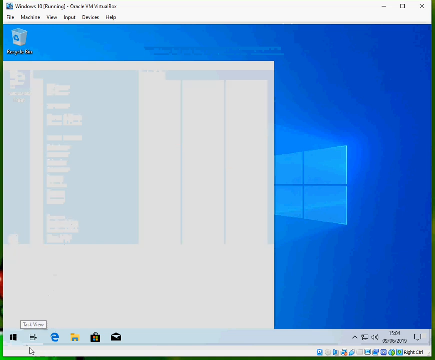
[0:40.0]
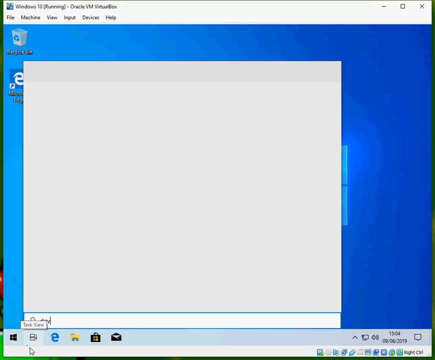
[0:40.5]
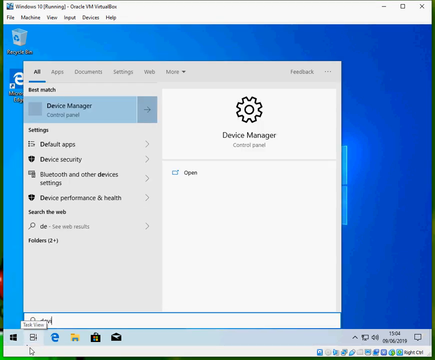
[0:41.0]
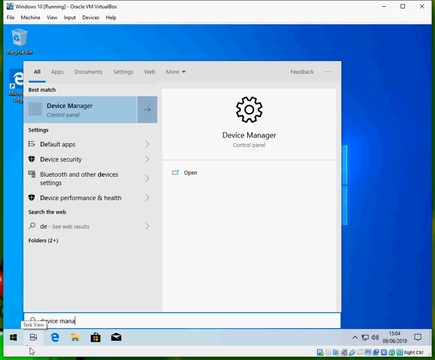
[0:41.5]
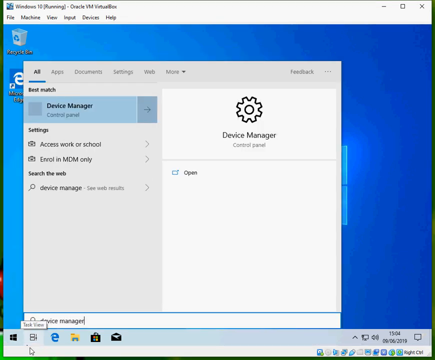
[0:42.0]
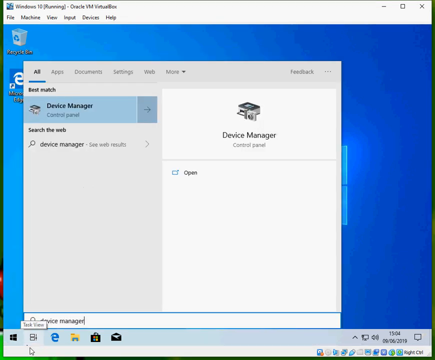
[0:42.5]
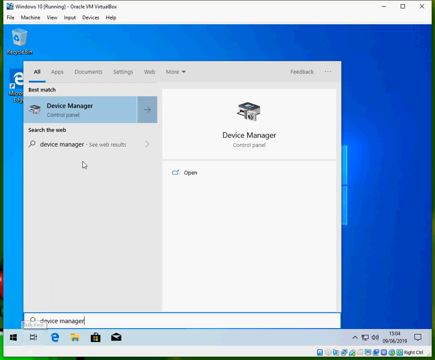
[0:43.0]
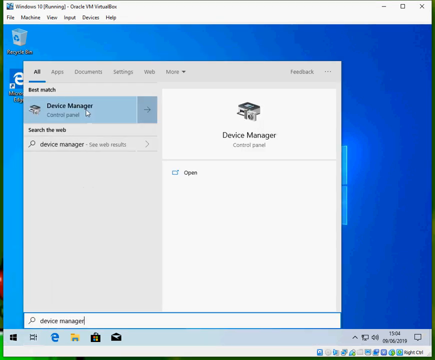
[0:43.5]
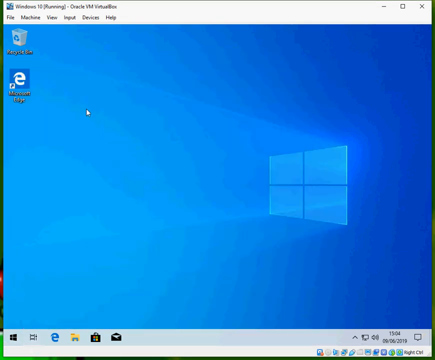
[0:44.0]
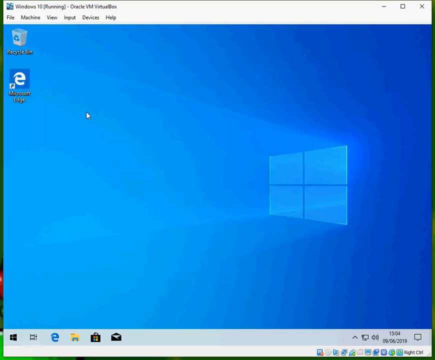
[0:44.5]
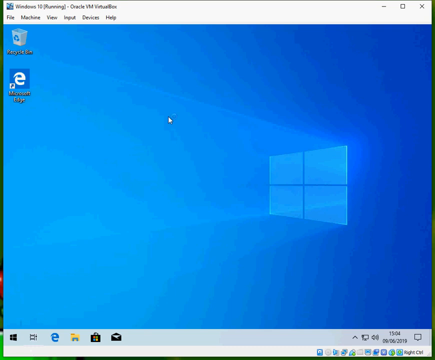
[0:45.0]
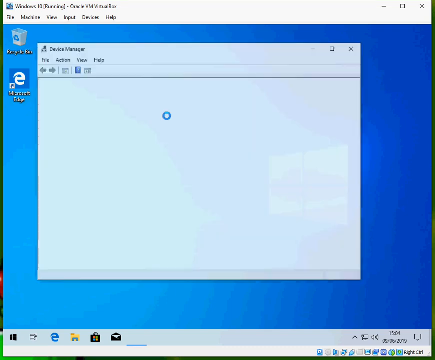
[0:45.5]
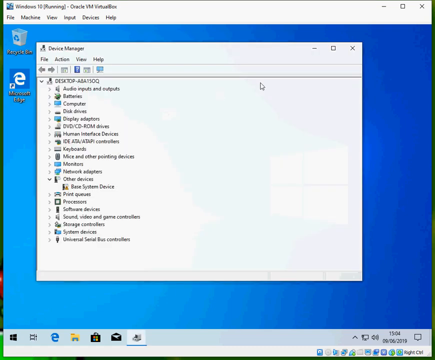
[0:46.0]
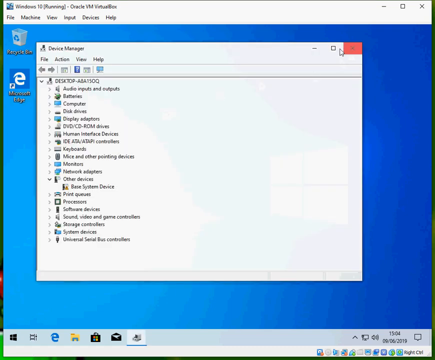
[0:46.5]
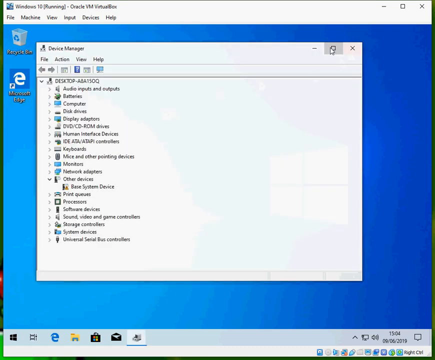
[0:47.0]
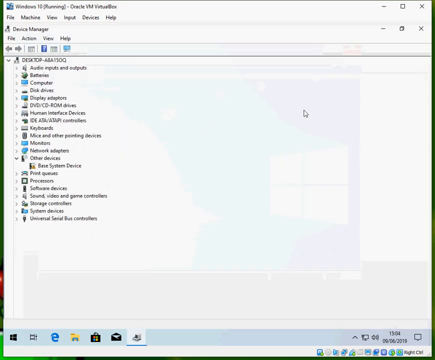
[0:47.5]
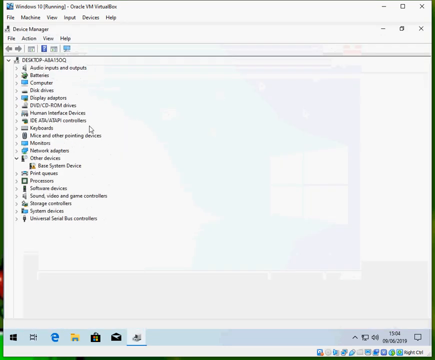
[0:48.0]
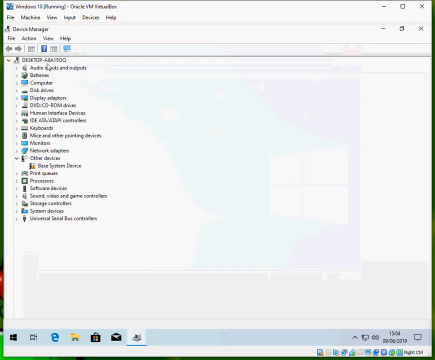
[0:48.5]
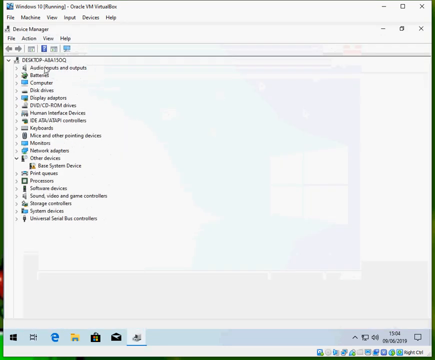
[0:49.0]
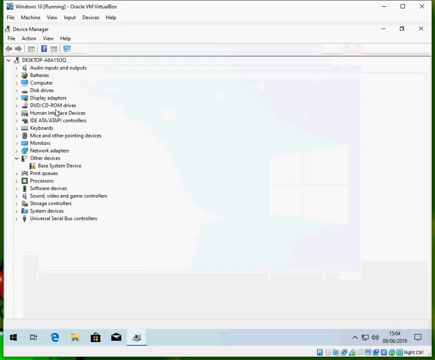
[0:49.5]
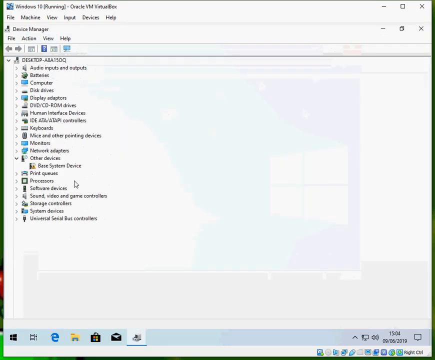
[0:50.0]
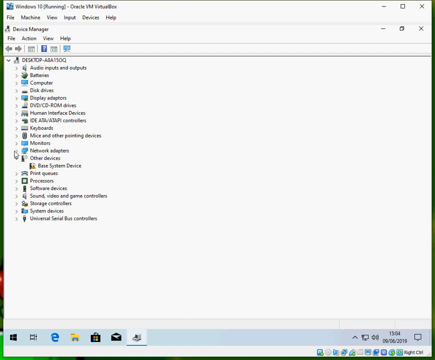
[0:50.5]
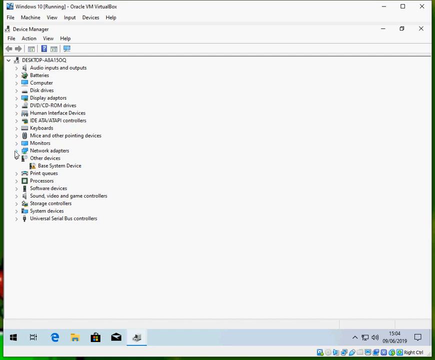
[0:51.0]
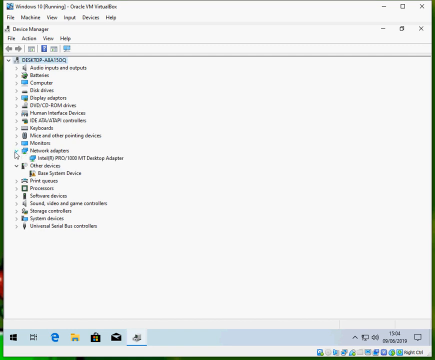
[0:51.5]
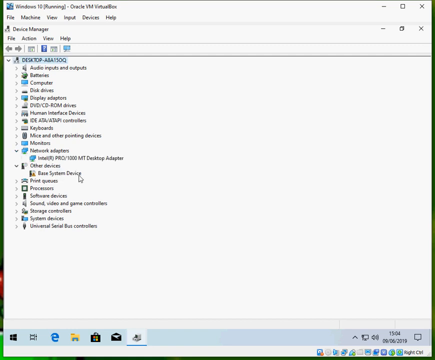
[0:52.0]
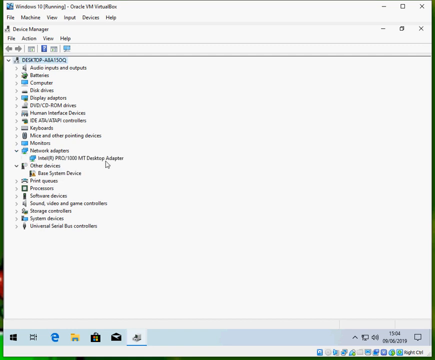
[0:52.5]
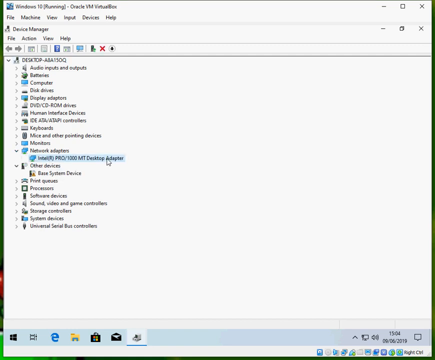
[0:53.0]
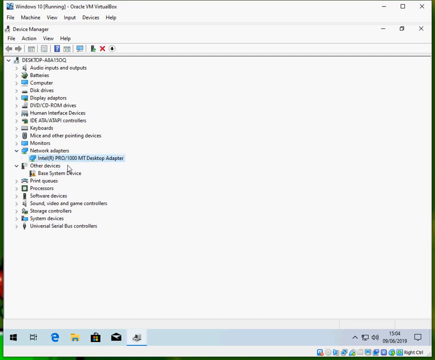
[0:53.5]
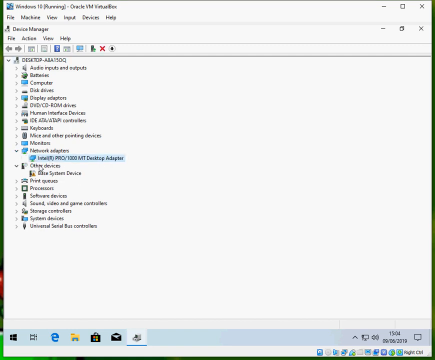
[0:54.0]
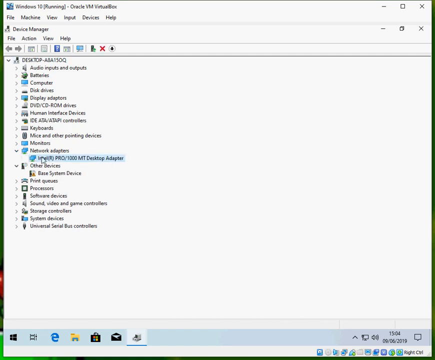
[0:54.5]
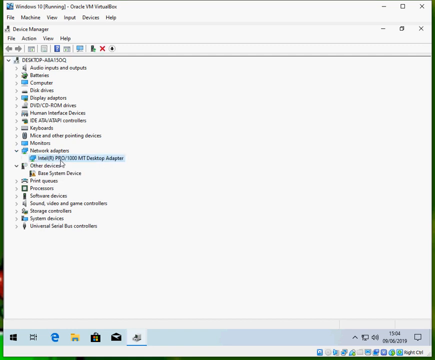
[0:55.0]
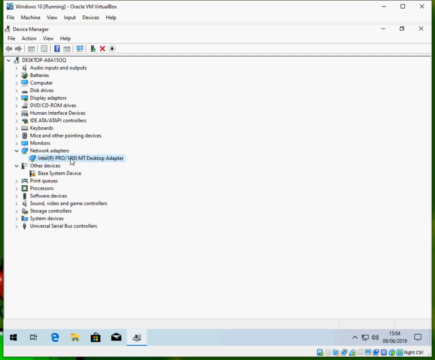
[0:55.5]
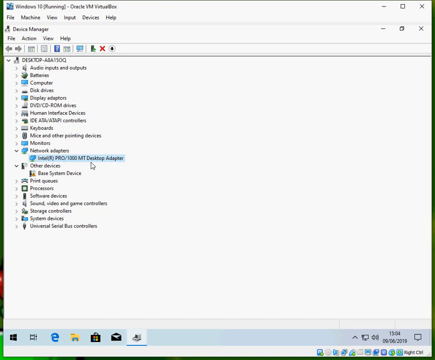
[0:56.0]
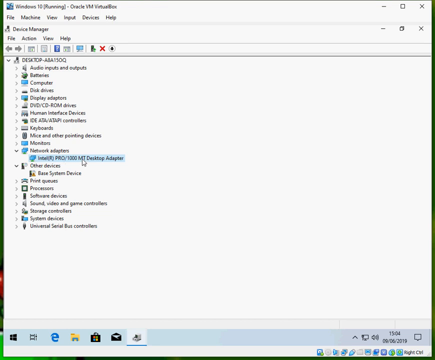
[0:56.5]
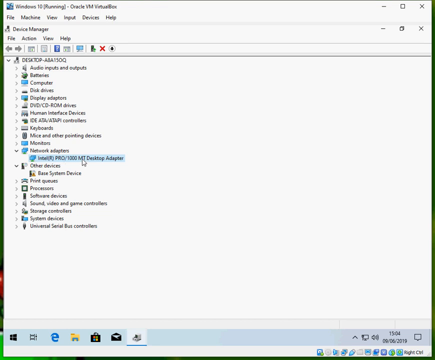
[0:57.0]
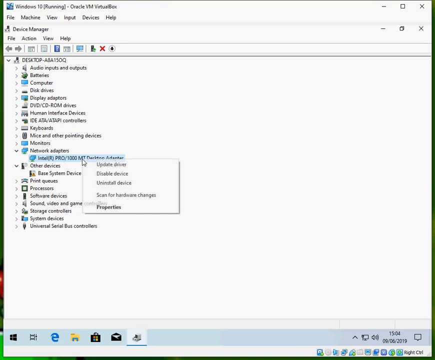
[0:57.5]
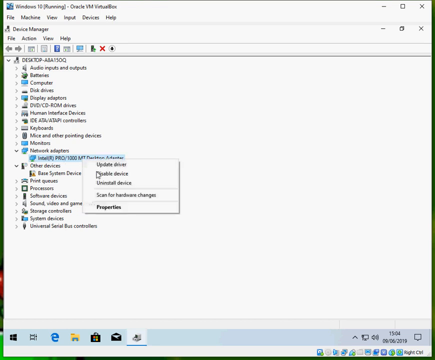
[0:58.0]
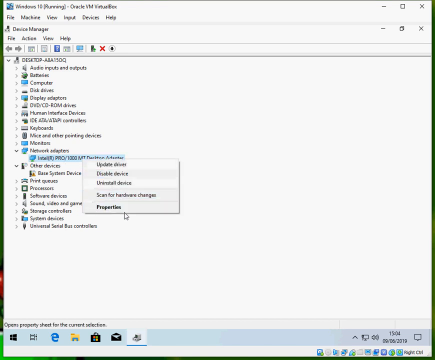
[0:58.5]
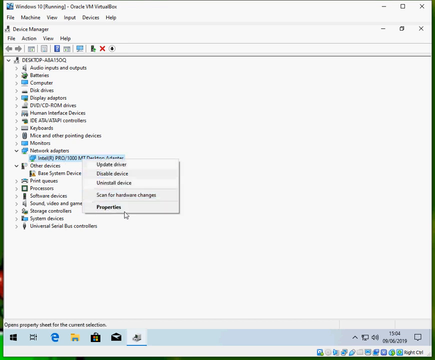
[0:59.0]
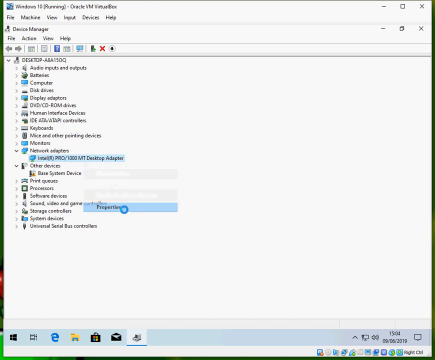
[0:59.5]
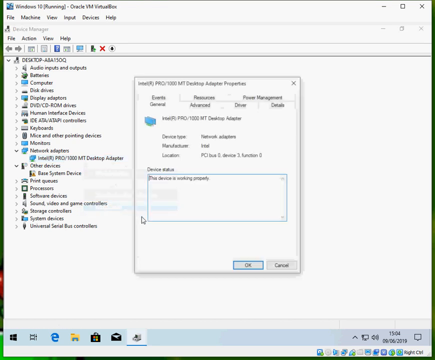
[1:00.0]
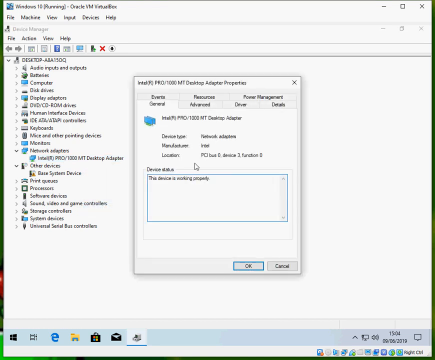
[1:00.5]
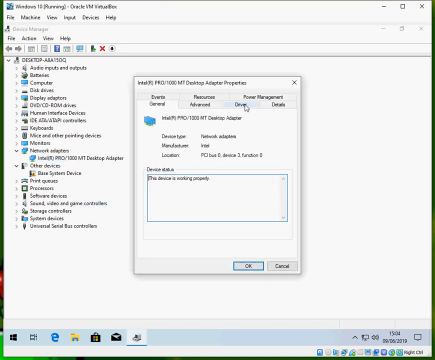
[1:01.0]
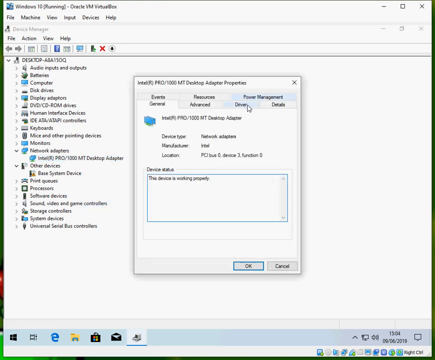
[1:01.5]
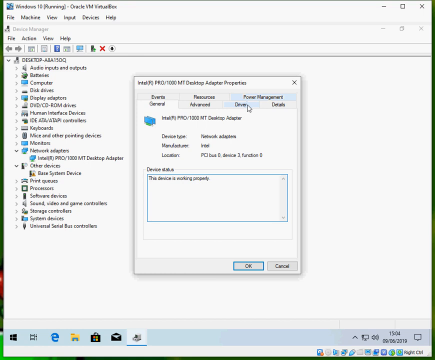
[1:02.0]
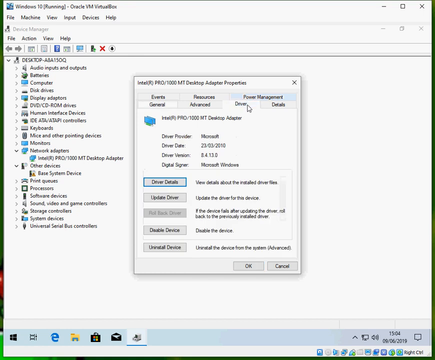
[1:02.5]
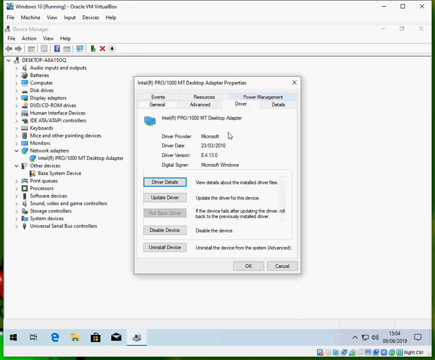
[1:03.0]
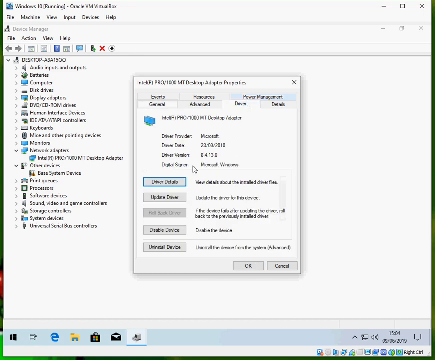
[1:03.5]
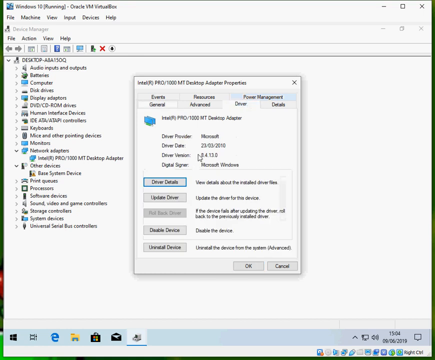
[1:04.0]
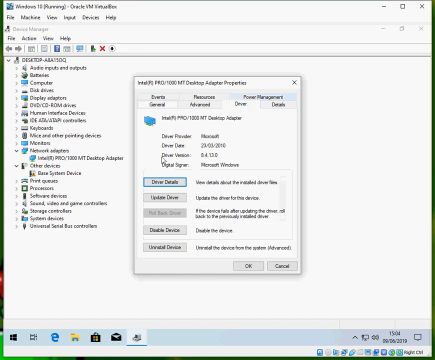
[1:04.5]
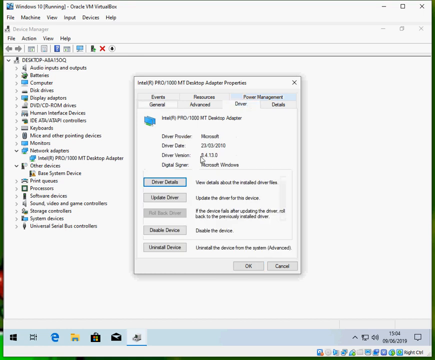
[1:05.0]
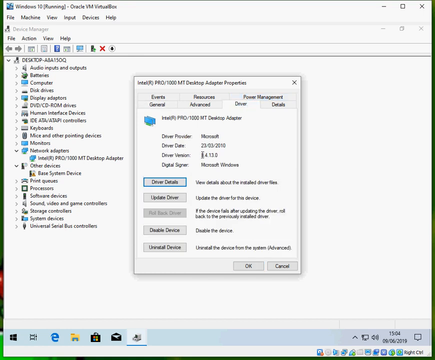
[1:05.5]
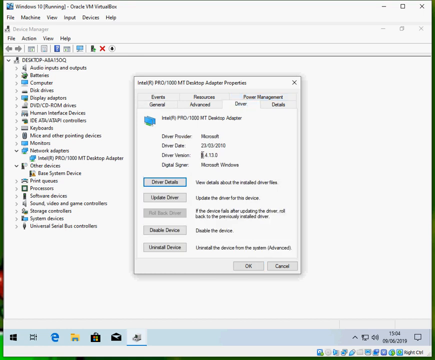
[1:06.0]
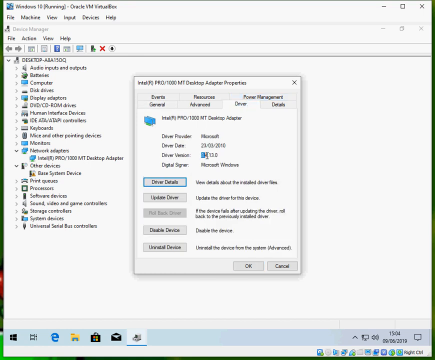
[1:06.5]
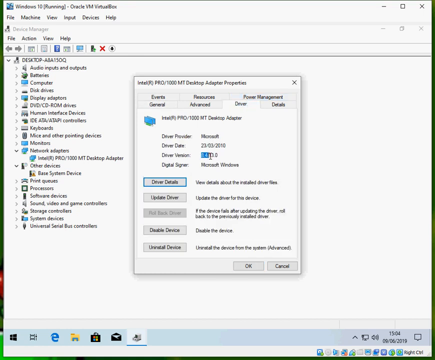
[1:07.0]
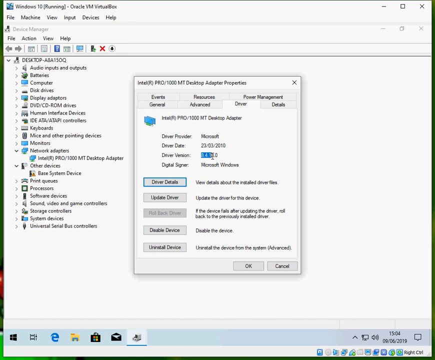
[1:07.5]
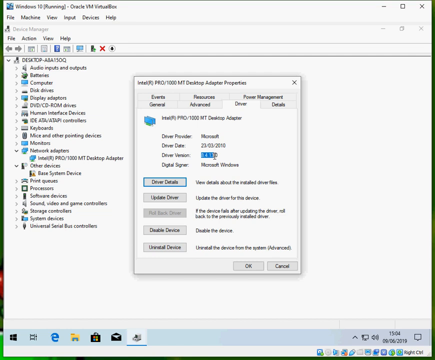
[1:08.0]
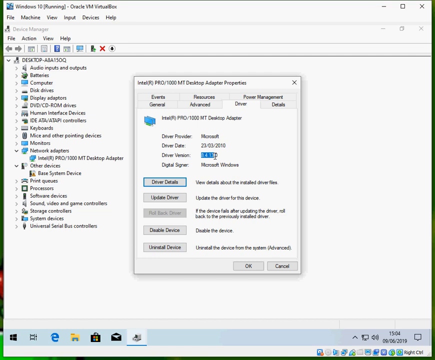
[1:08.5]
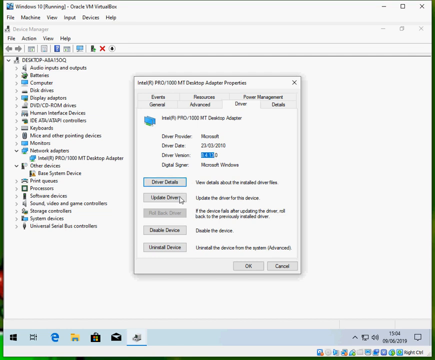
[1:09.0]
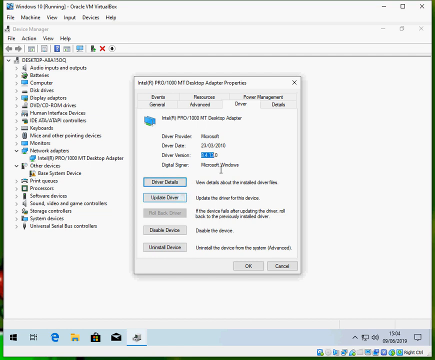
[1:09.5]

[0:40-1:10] A person navigates a Windows 10 PC. Their cursor brings up a box for the device manager control panel, and they click on Device Manager, which opens the main Device Manager page with four tabs and multiple right-facing arrows for programs. They make the page full, move the cursor around, and click a drop-down arrow to check the properties for the desktop adapter. The Properties box opens, and they check the driver version, highlighting it with the cursor. The person then returns to the running page, which is metallic blue with the Windows emblem and has two shortcuts, one for Microsoft Edge and one for Recycling Bin.